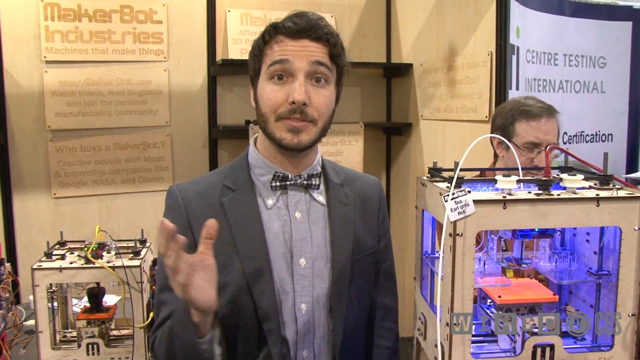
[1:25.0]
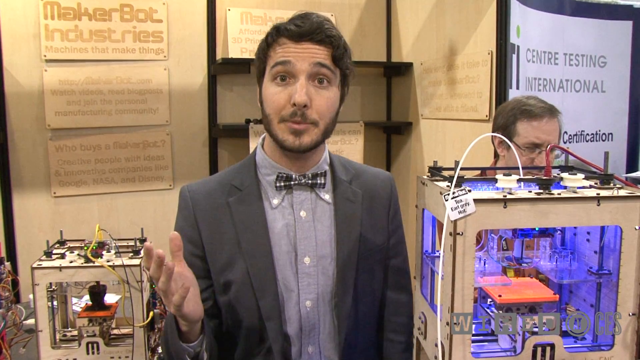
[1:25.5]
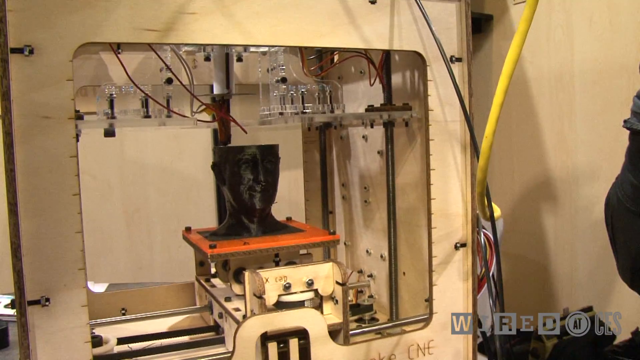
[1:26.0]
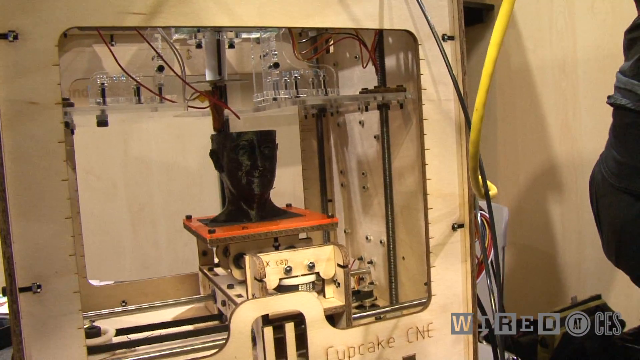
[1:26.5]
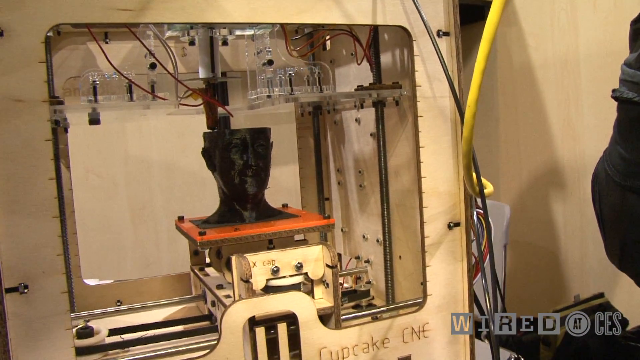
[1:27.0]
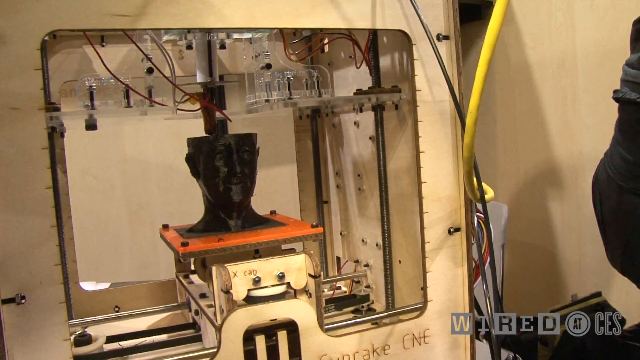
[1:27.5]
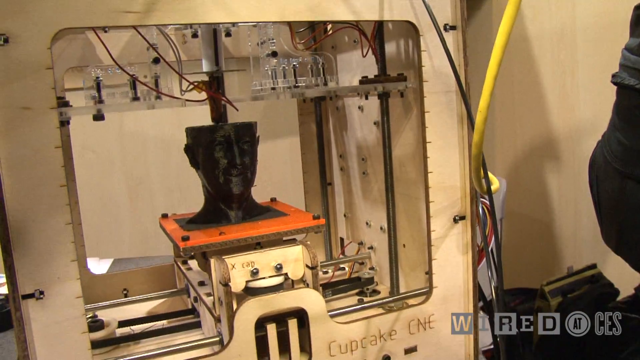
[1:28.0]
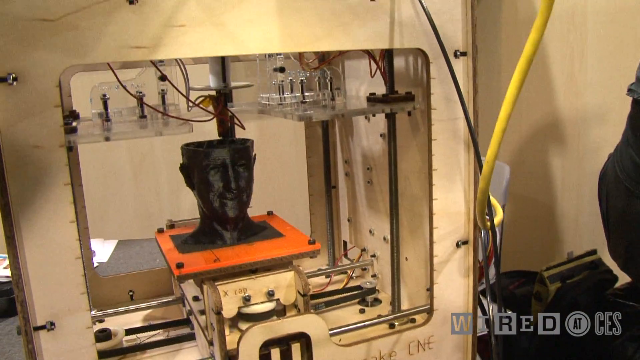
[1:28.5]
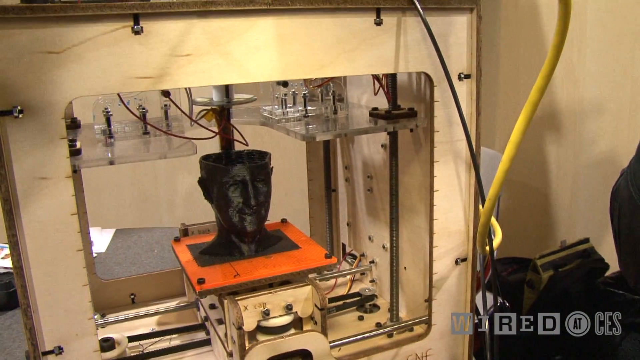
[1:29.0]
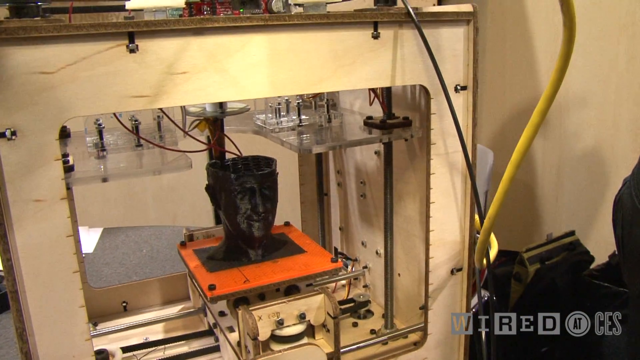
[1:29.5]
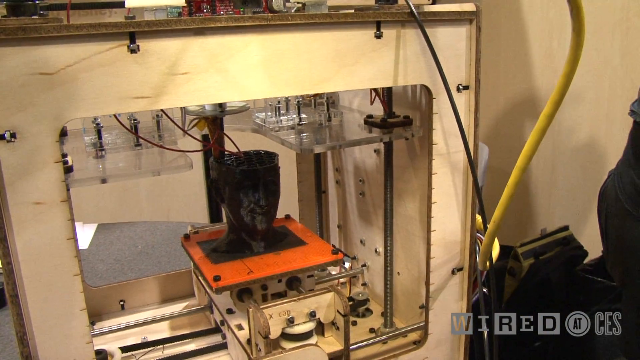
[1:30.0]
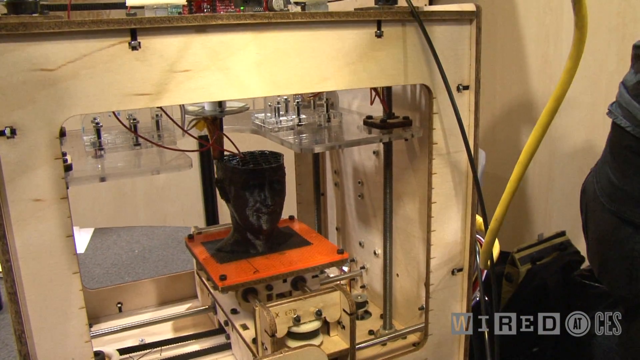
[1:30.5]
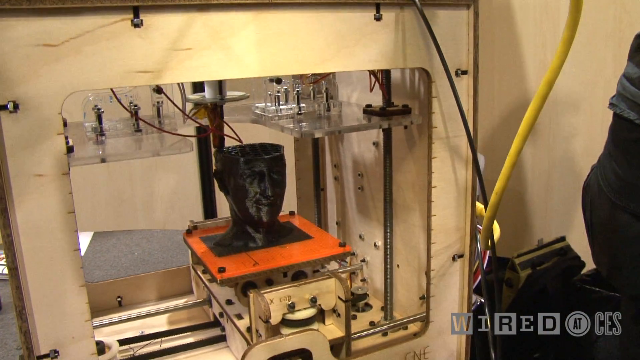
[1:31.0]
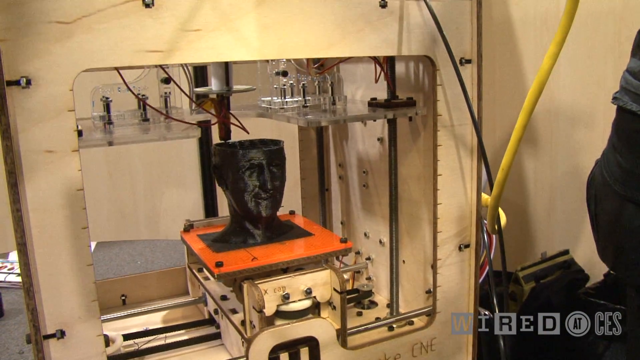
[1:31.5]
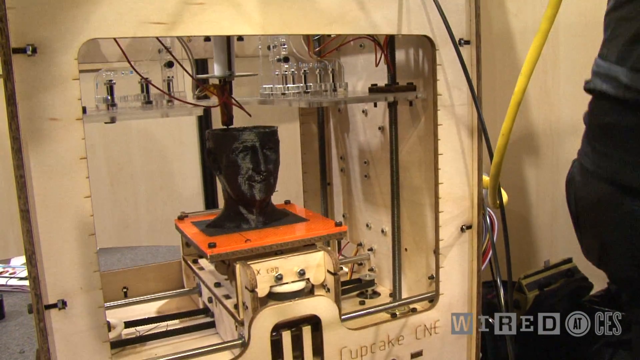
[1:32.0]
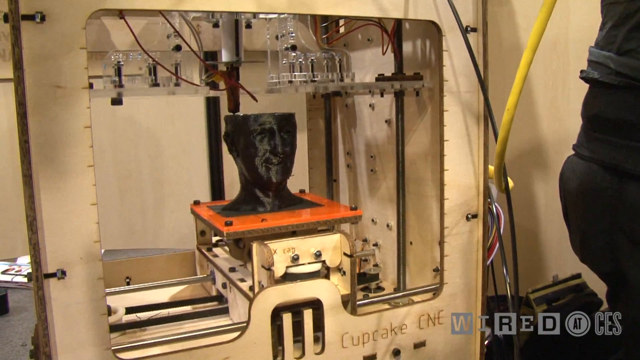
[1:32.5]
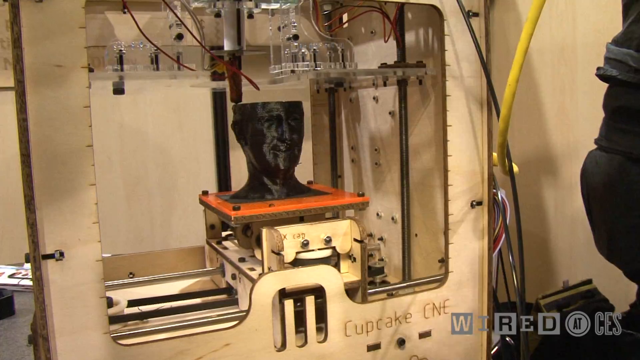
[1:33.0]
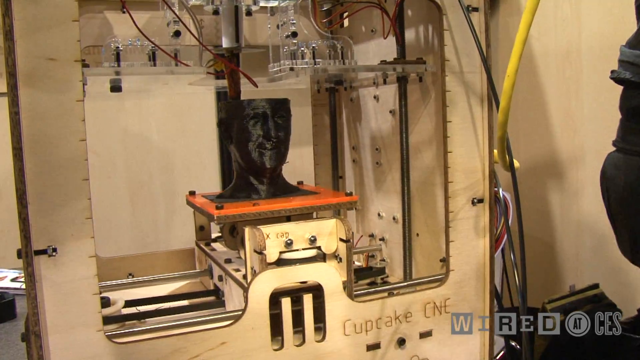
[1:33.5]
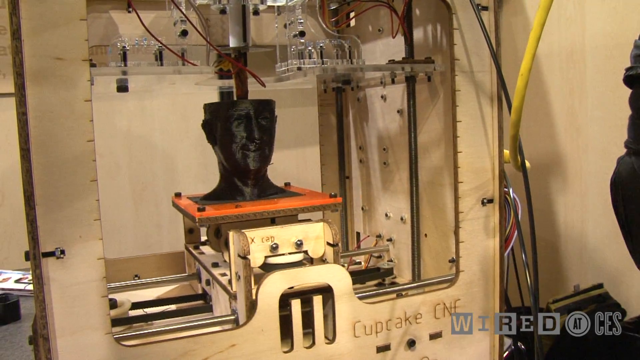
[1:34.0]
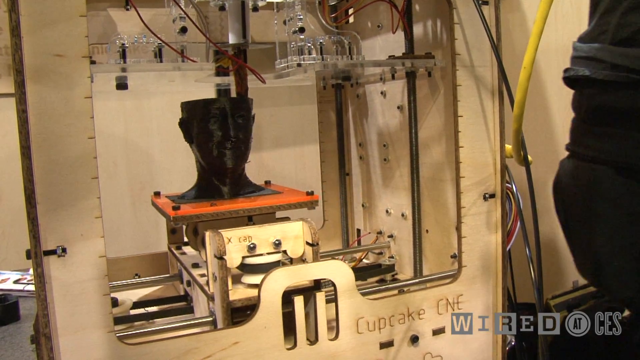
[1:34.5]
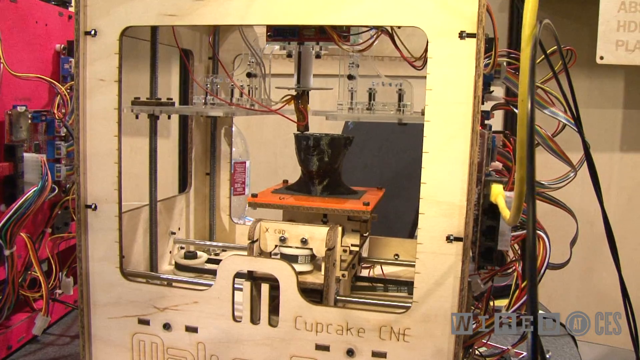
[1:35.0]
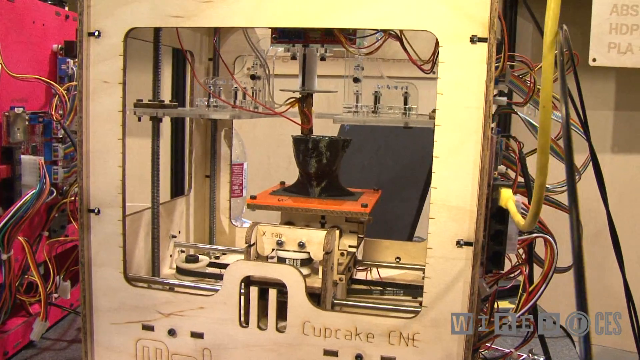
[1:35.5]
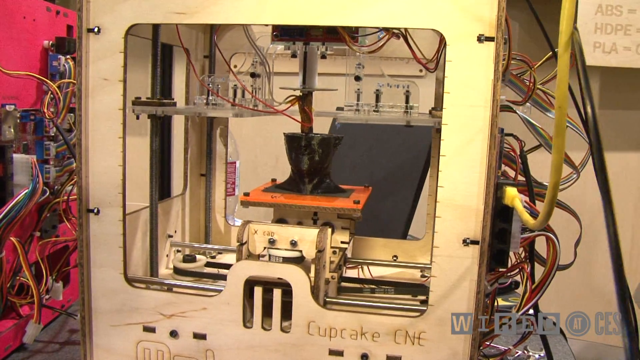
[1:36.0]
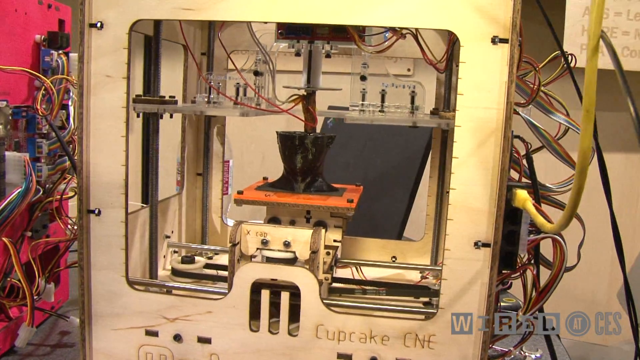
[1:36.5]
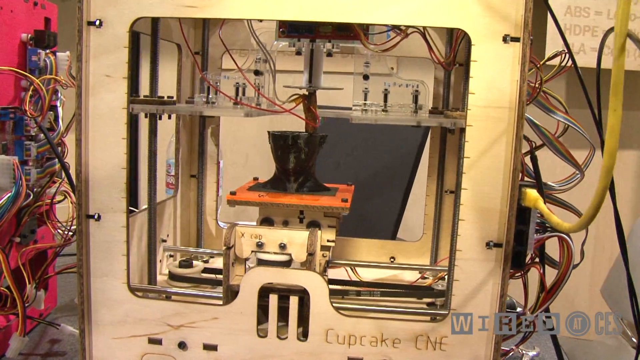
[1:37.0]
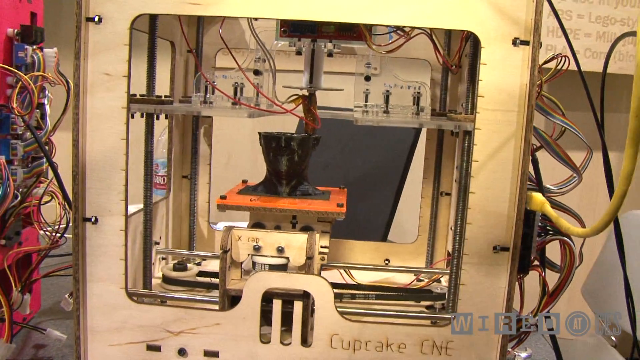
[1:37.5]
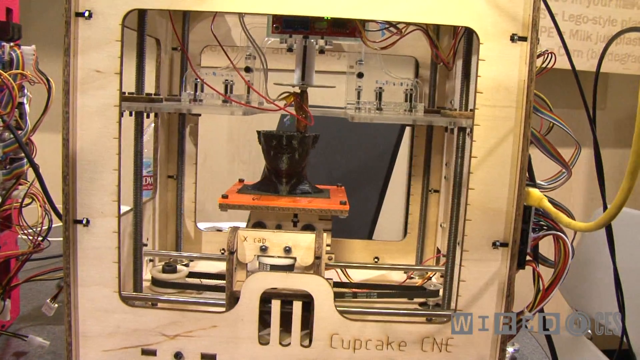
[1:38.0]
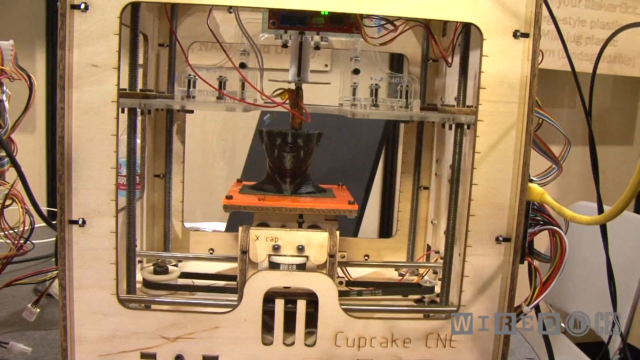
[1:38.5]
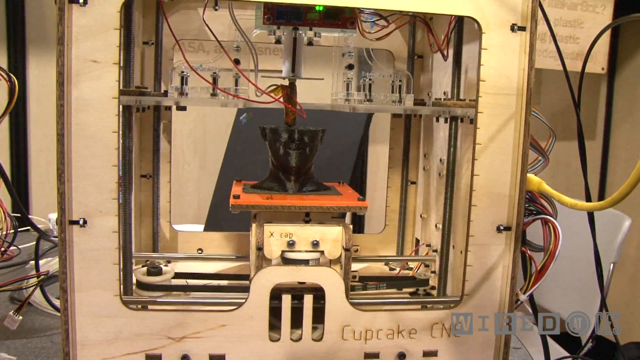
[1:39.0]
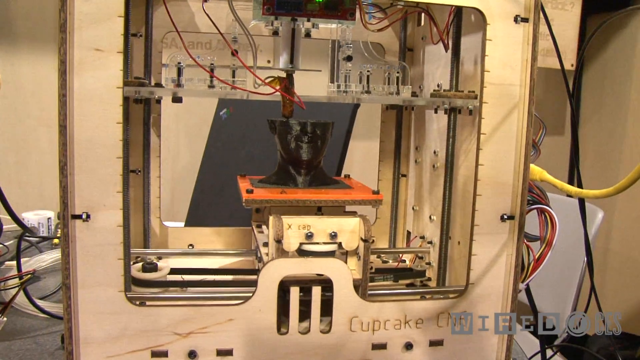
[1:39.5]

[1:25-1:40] Inside the 3D printer, the black head bust appears to still be in progress; it seems to be a long process with little visible progress. The mechanism moves back and forth in a parallel direction. The camera zooms around 360 degrees as the bust is printed inside, showing the pulleys and tracks it is pushed along and the cylindrical insertion of the 3D material. The speaker apparently points to it again and explains it.